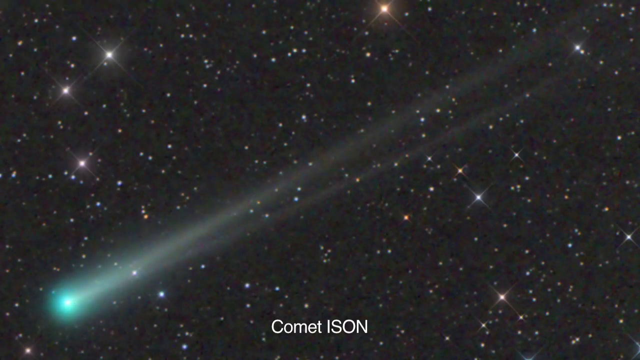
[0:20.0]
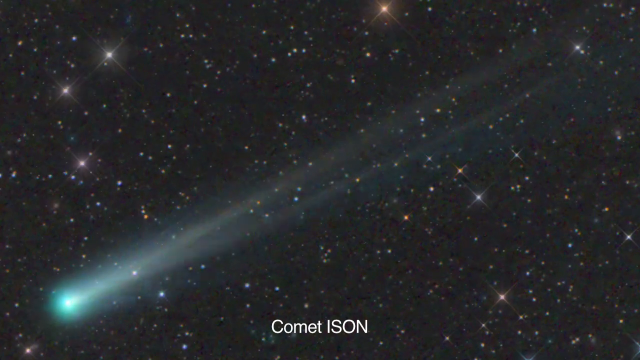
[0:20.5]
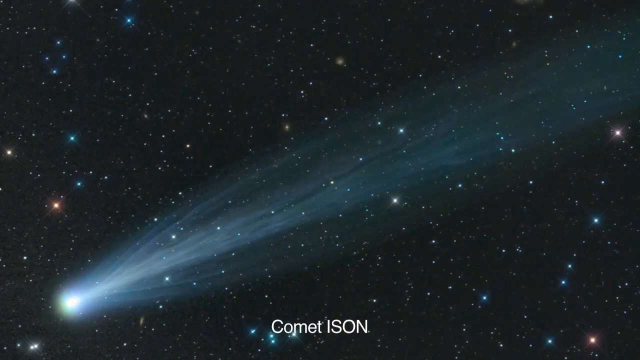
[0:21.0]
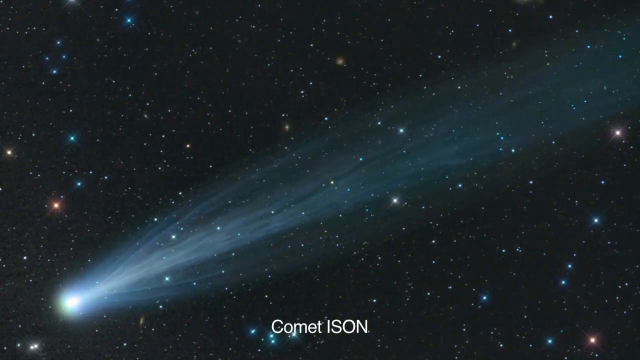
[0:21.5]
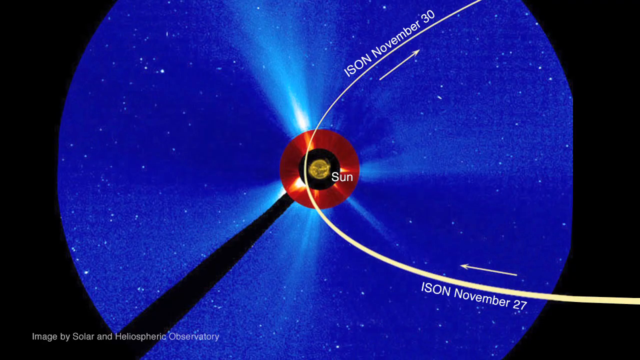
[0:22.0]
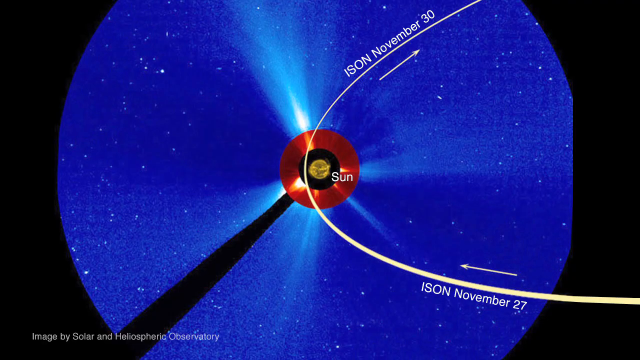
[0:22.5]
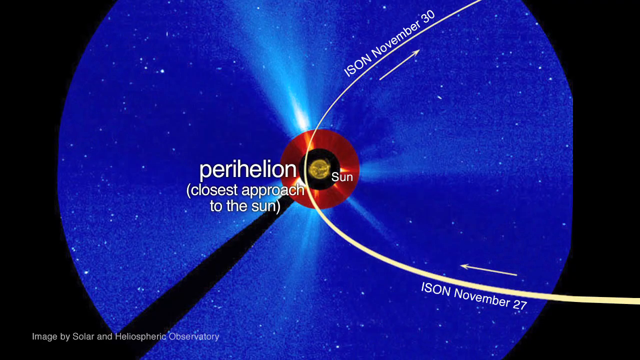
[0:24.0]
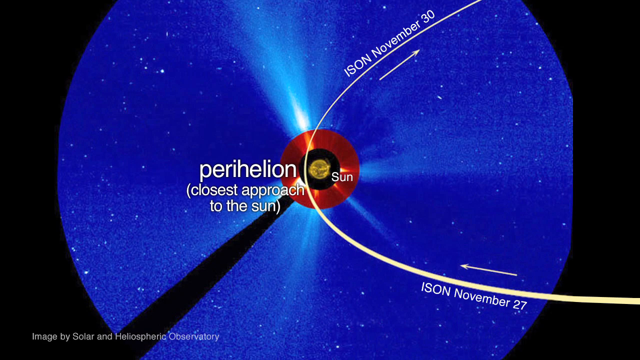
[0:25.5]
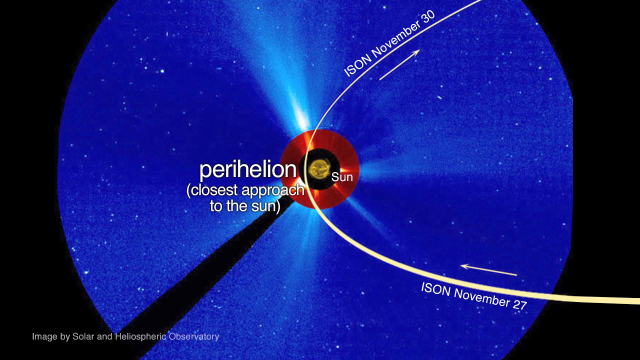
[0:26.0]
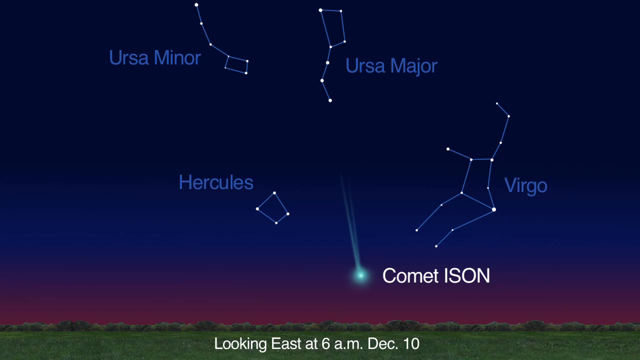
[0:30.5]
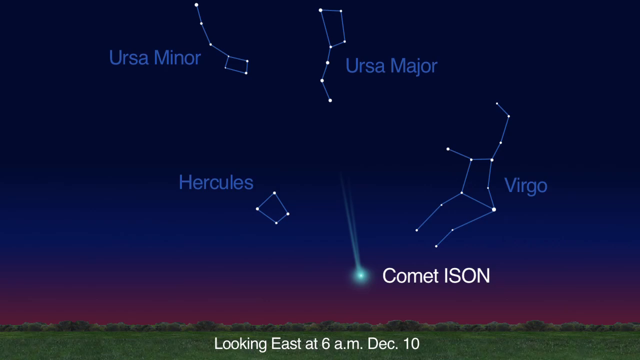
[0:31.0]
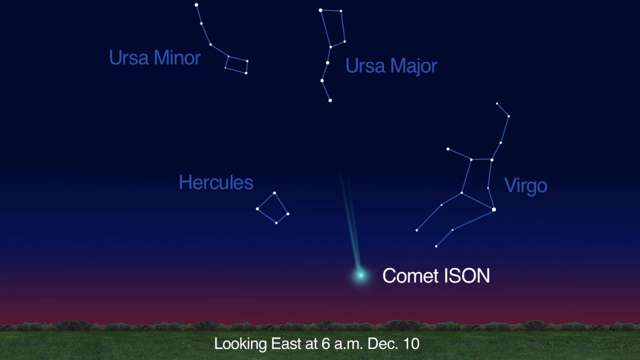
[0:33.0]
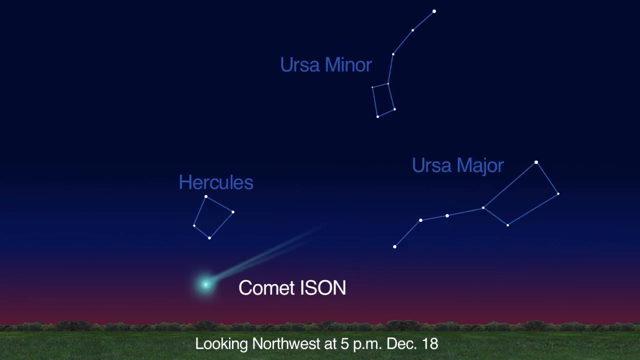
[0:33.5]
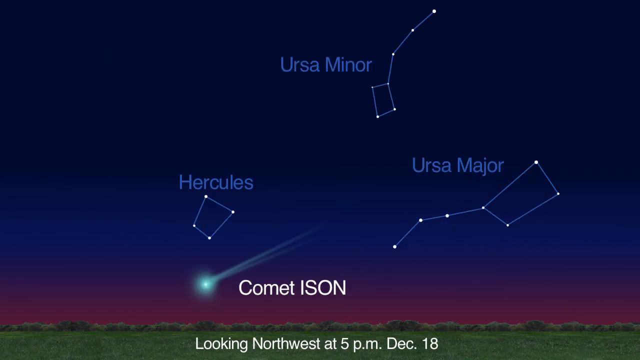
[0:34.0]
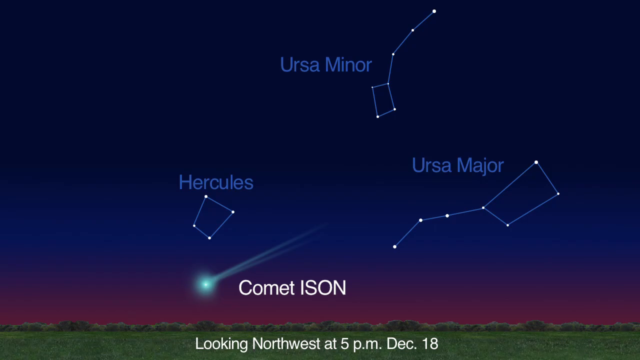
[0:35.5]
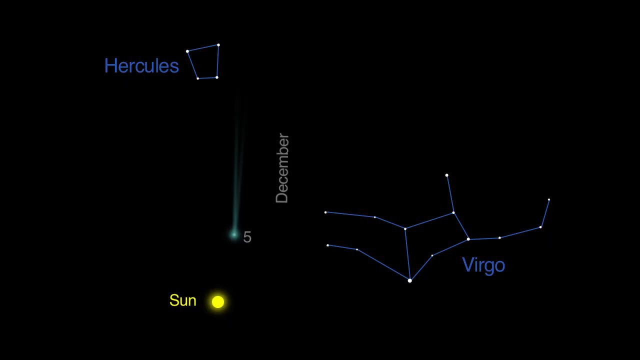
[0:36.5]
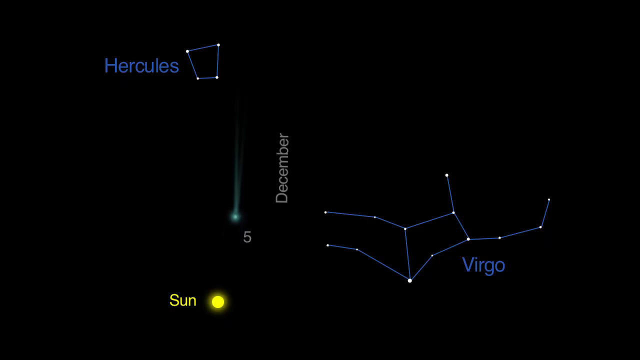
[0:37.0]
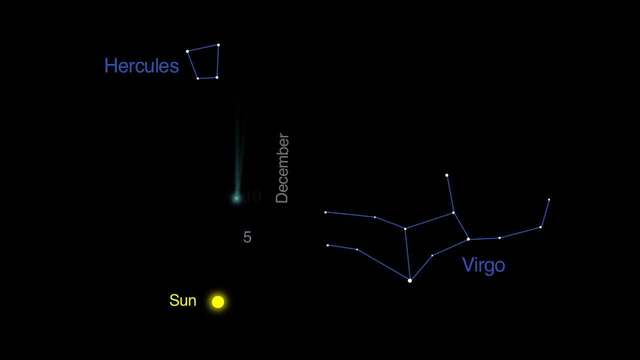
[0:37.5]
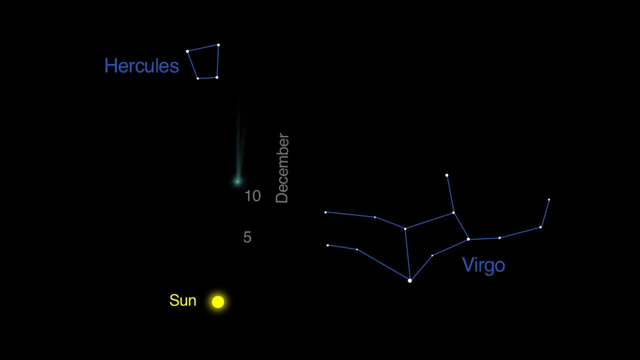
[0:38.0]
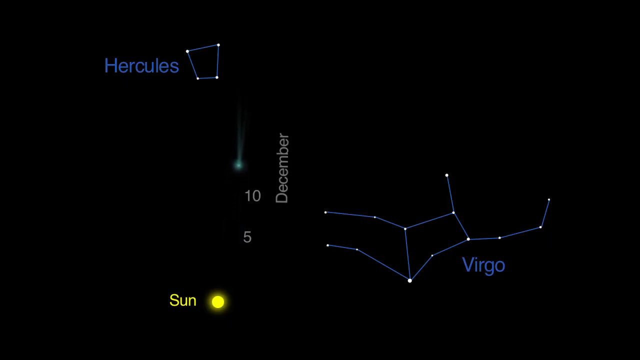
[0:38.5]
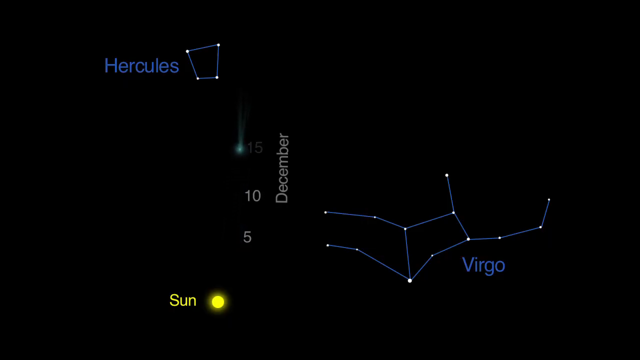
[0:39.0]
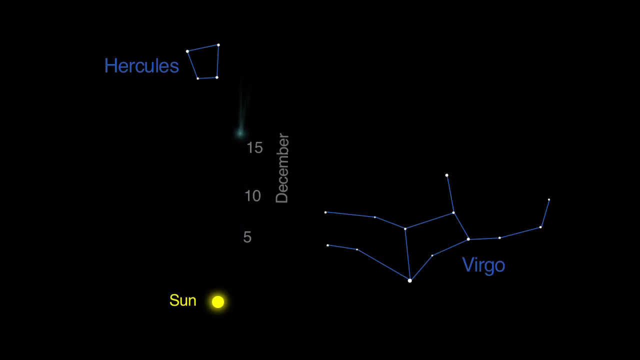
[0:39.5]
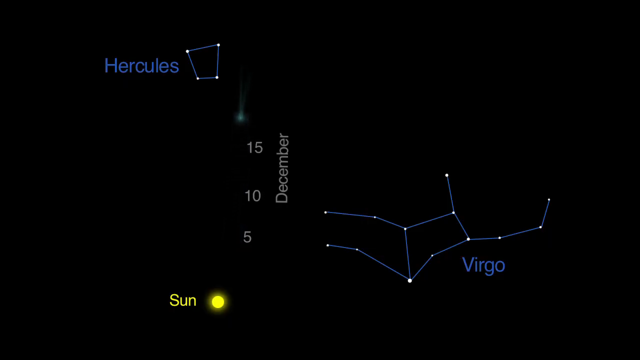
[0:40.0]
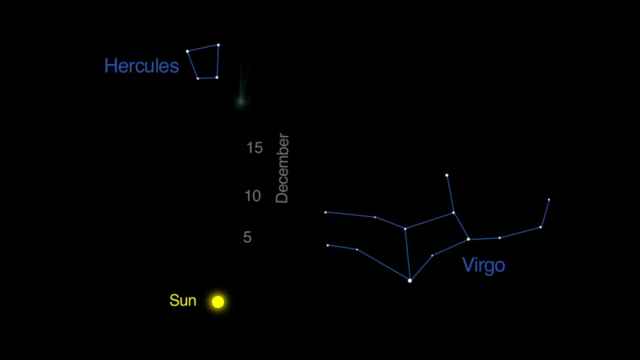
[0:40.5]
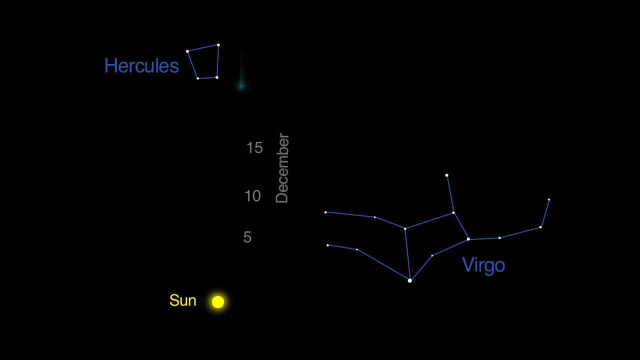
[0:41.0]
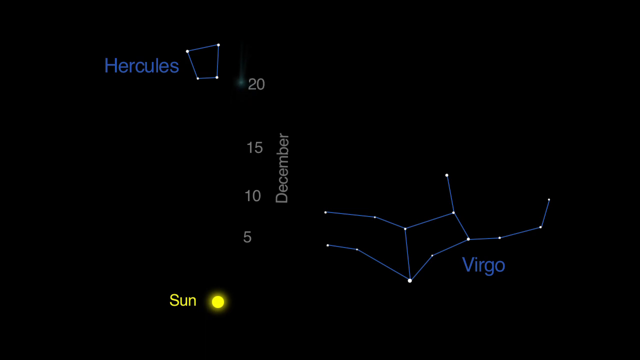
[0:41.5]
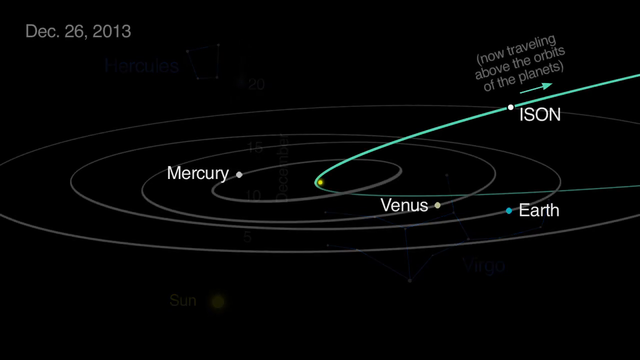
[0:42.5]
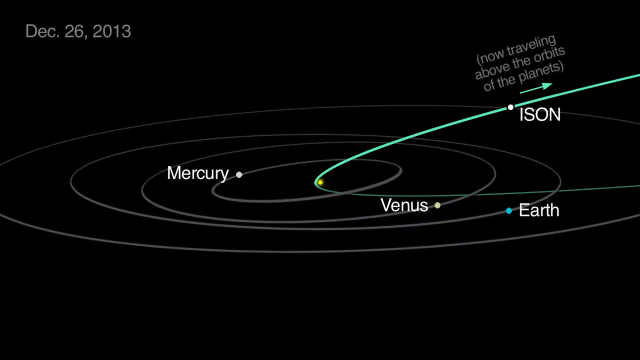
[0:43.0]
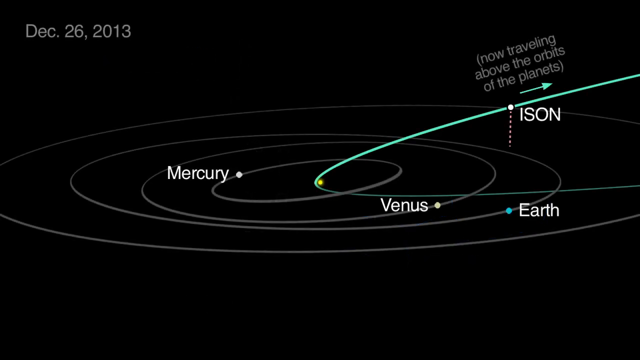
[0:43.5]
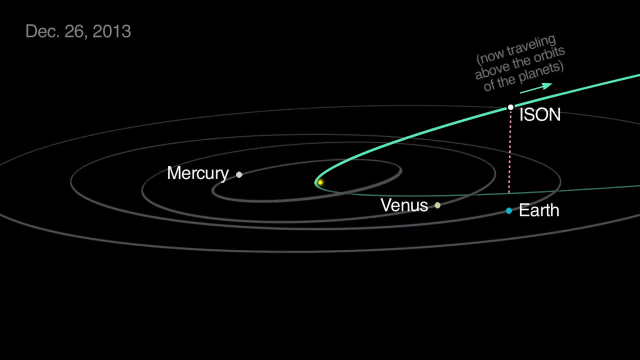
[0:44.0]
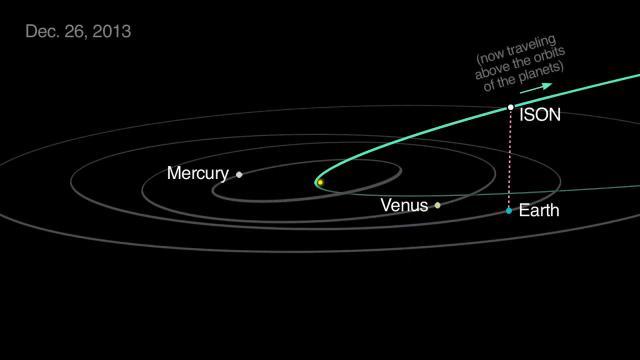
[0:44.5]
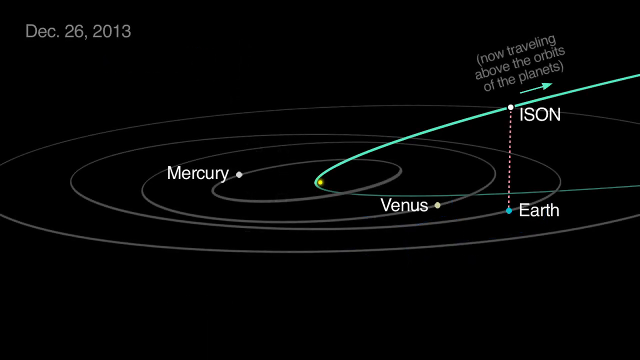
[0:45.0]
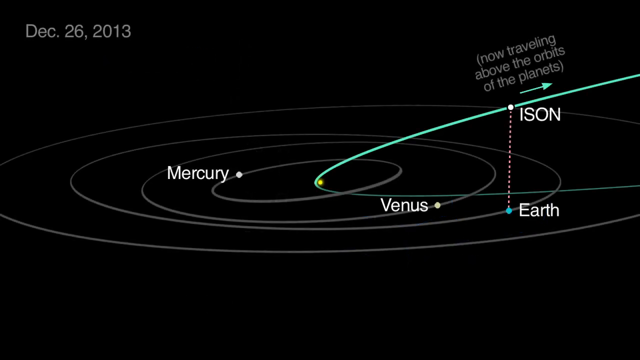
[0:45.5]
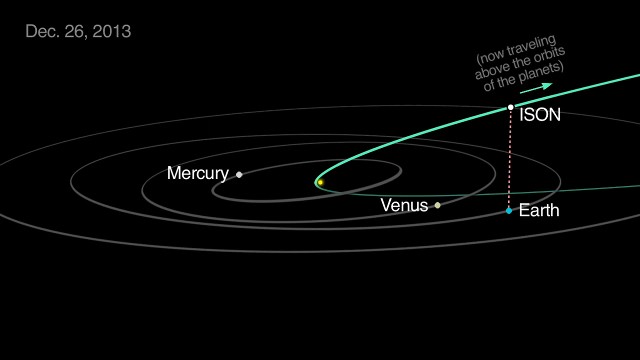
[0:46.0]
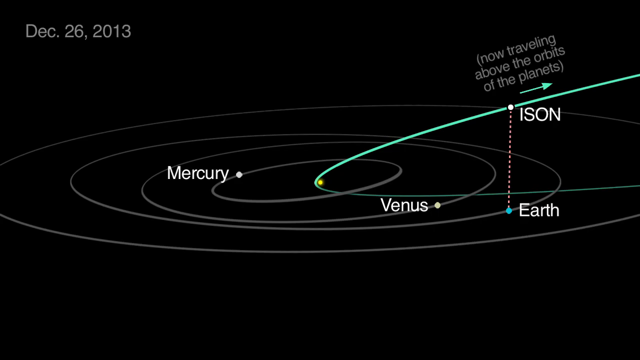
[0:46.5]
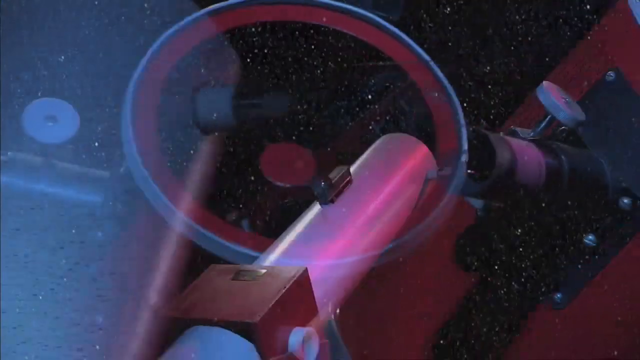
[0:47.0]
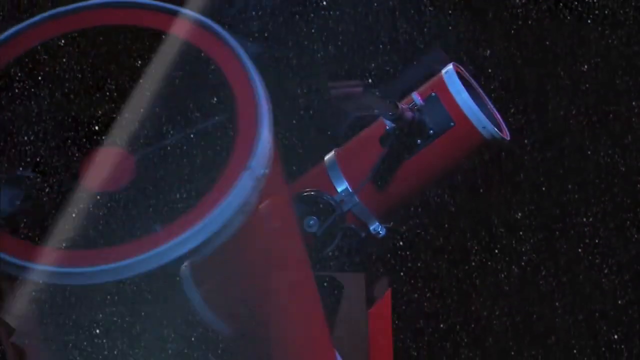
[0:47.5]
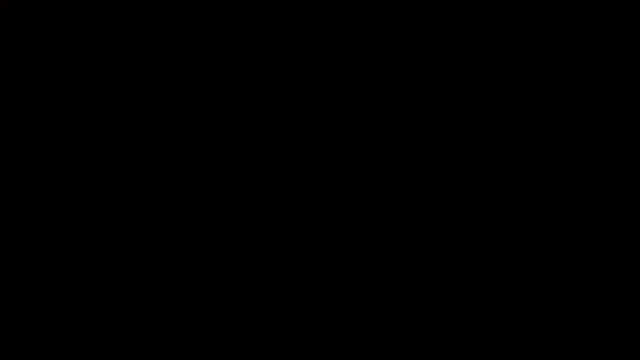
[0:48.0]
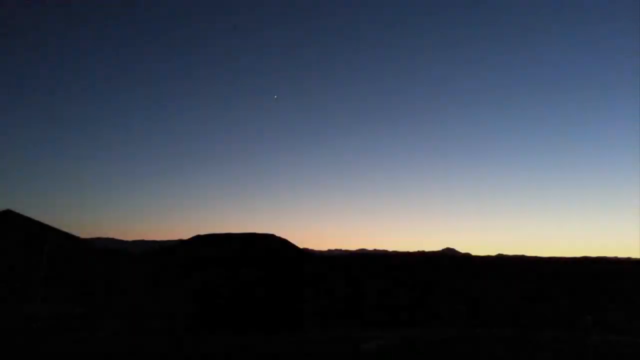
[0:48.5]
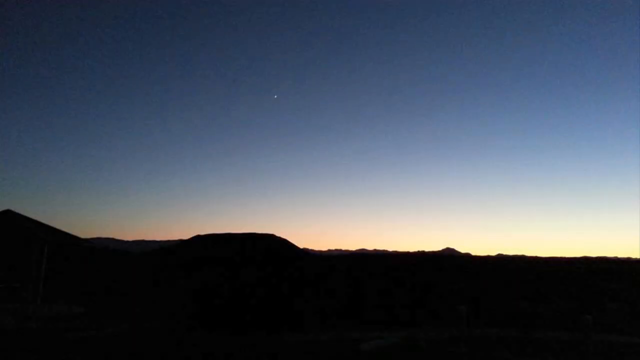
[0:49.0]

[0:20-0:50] The comet is shown, followed by its closest approach to the sun, with dates of November 30th, November 27th and December. The sun appears and the comet moves on December 15th. The comet's trajectory is shown traveling above the orbits of Mercury, Venus and Earth on December 26, 2013. A morning sunrise or evening sunset follows, with a small white comet in a multicolored sky of blue, orange, yellow, light blue and pink. The flat land is dark, so the landscape cannot be seen, forming a silhouette in the background; the comet is almost in the middle above the landscape.